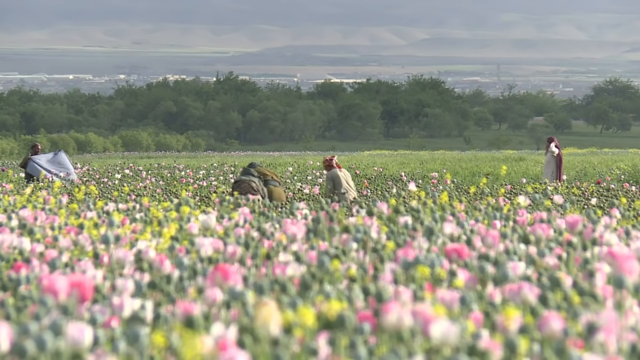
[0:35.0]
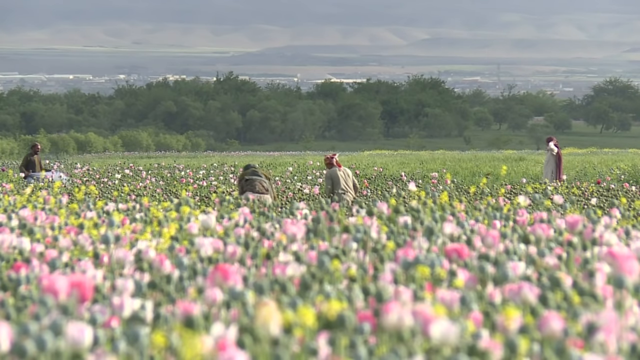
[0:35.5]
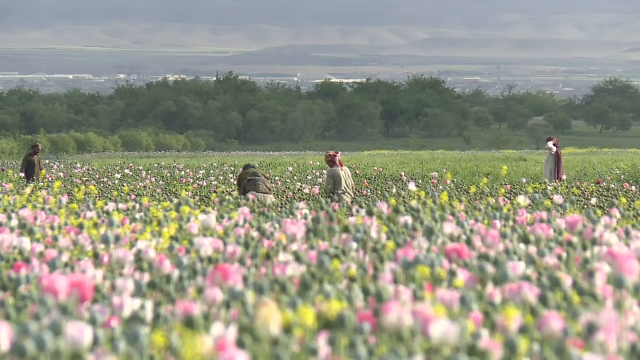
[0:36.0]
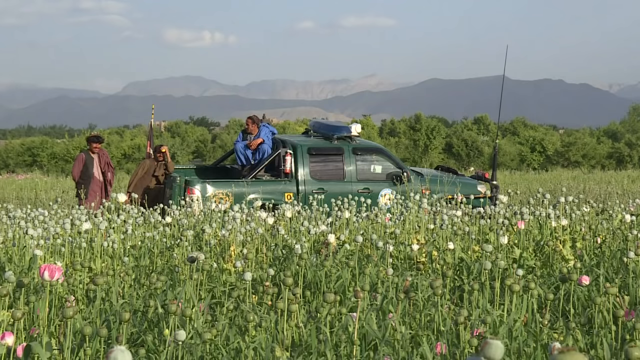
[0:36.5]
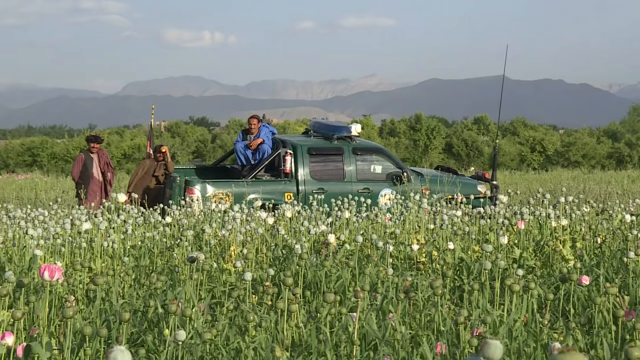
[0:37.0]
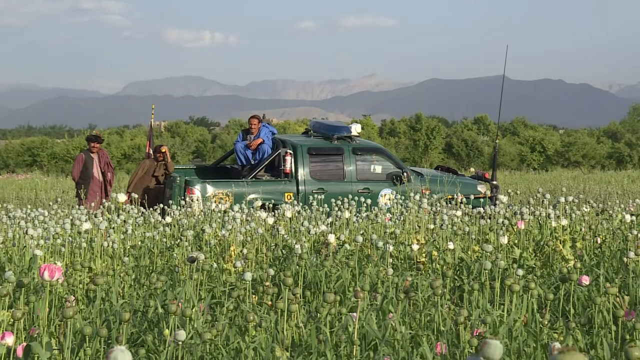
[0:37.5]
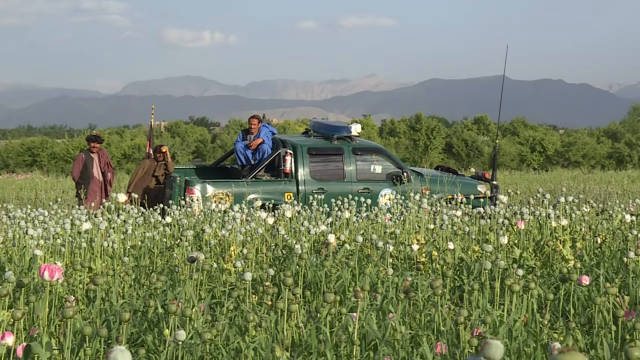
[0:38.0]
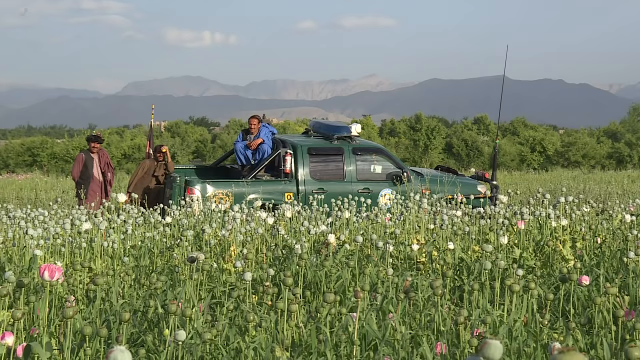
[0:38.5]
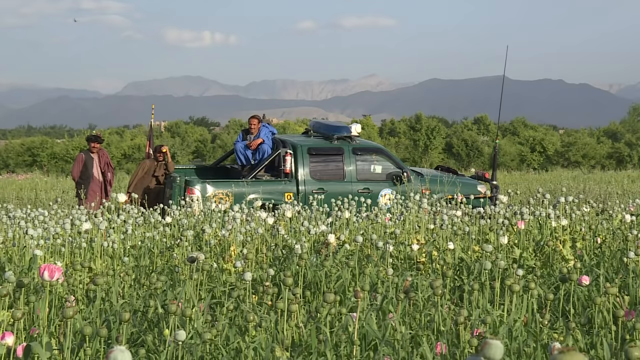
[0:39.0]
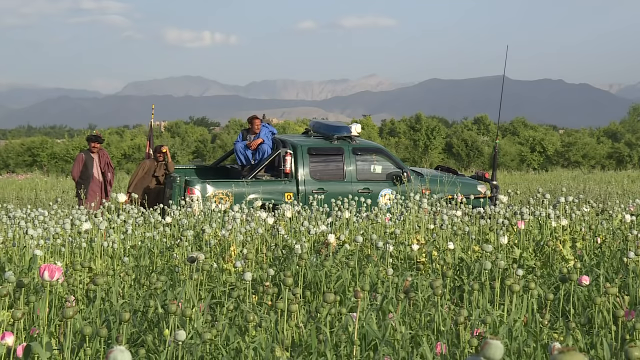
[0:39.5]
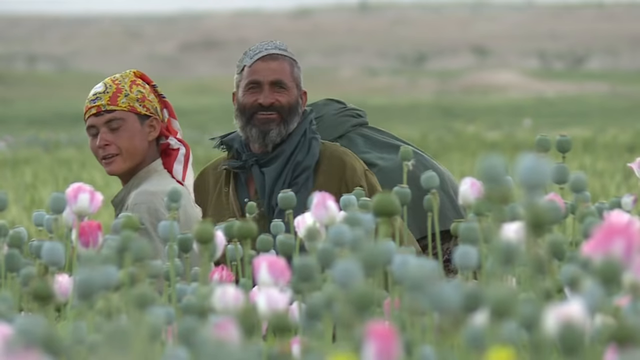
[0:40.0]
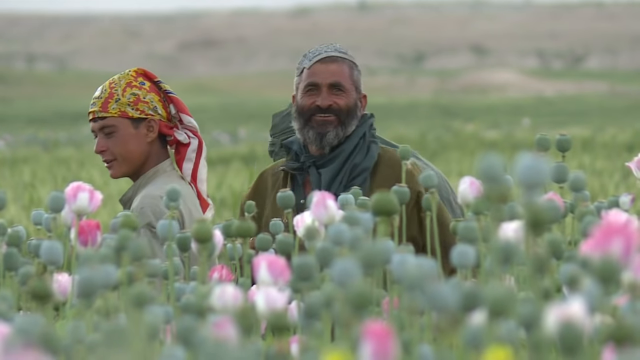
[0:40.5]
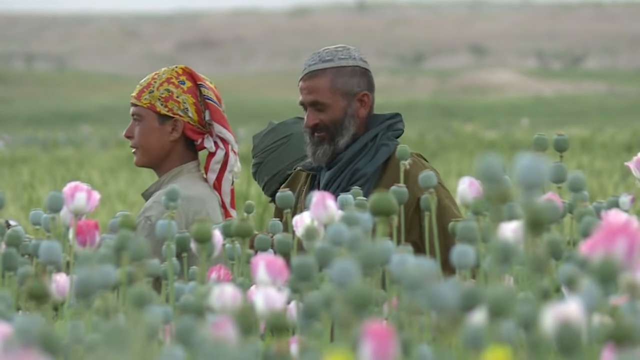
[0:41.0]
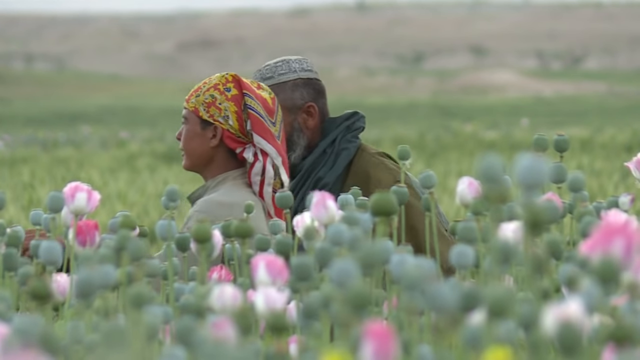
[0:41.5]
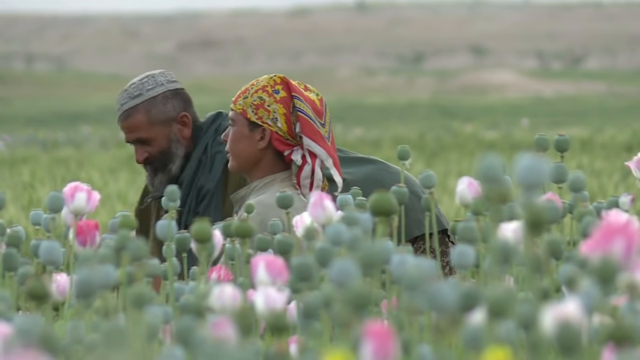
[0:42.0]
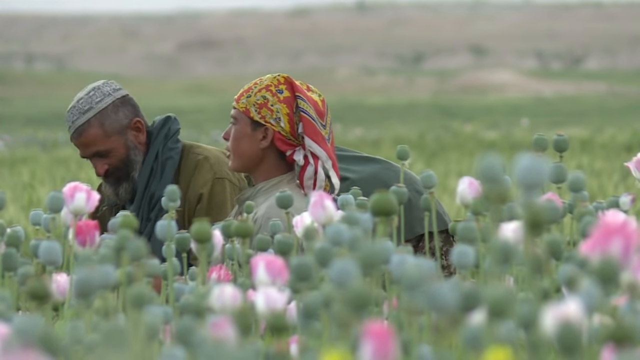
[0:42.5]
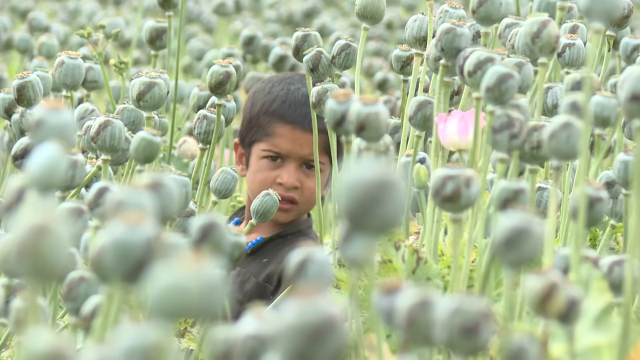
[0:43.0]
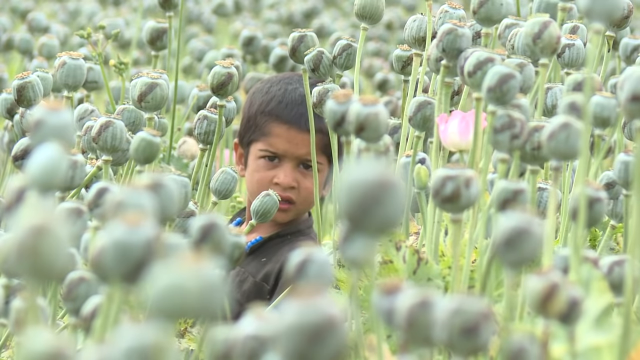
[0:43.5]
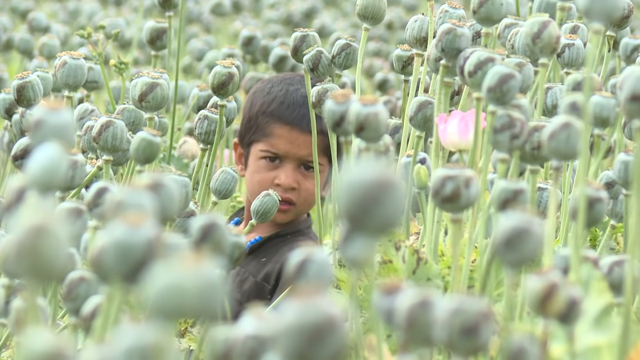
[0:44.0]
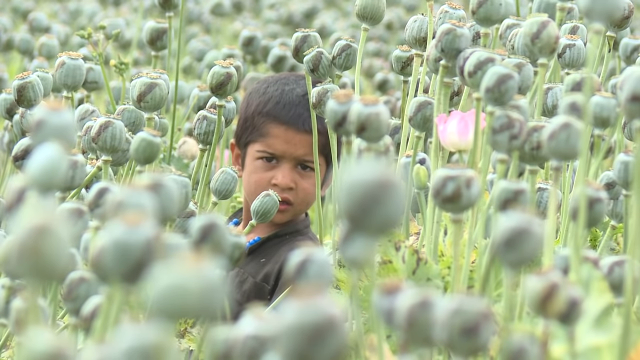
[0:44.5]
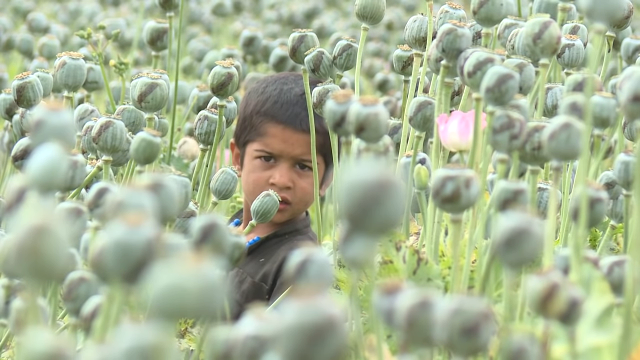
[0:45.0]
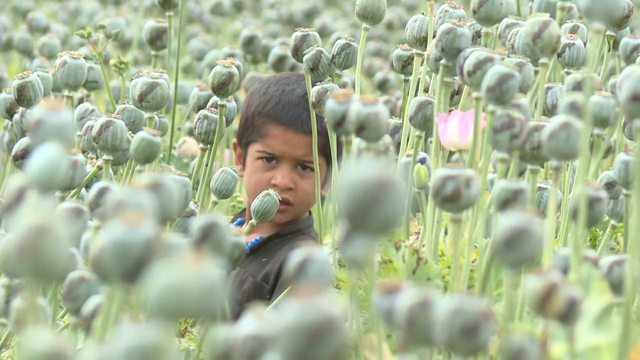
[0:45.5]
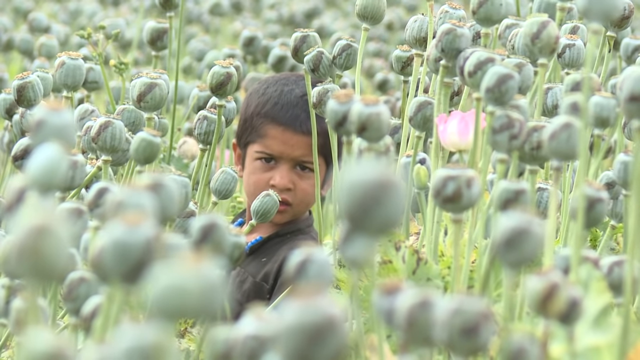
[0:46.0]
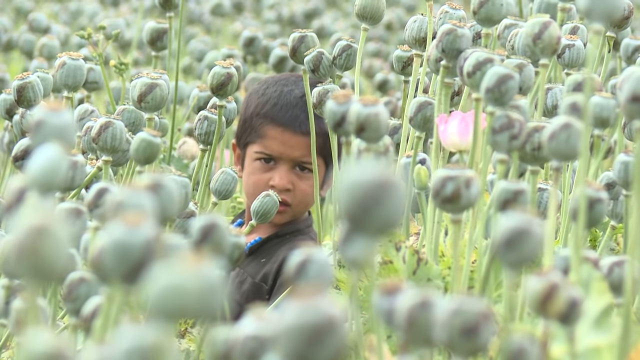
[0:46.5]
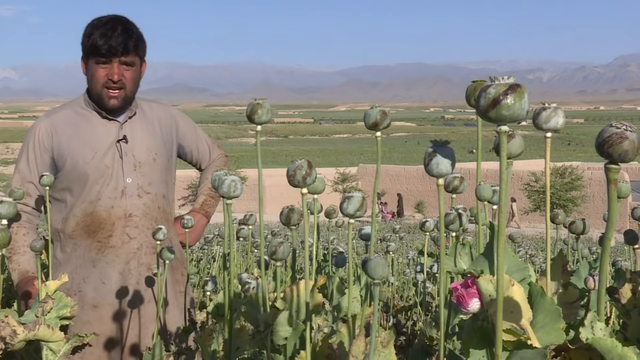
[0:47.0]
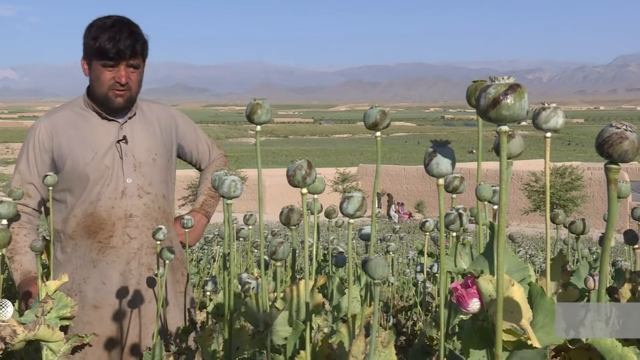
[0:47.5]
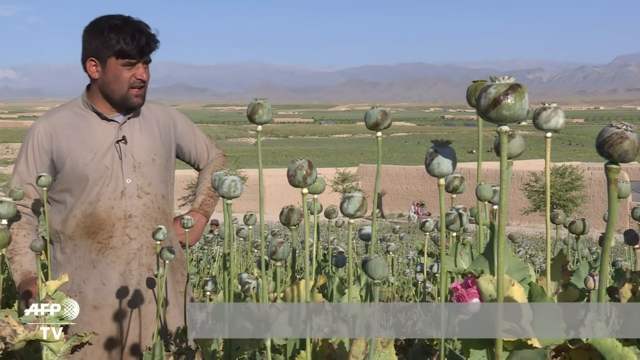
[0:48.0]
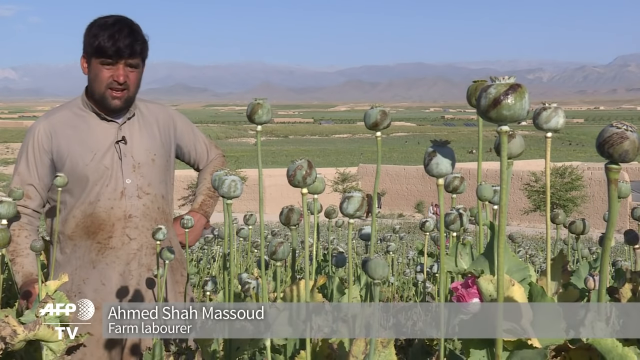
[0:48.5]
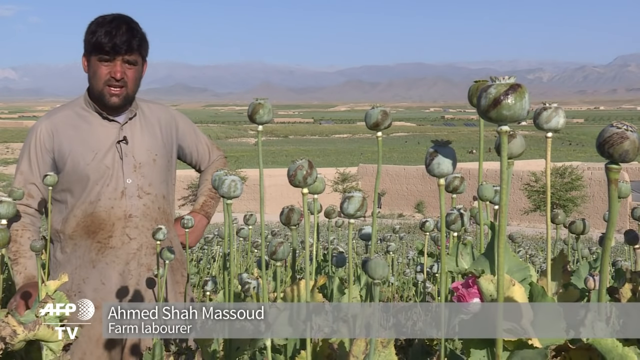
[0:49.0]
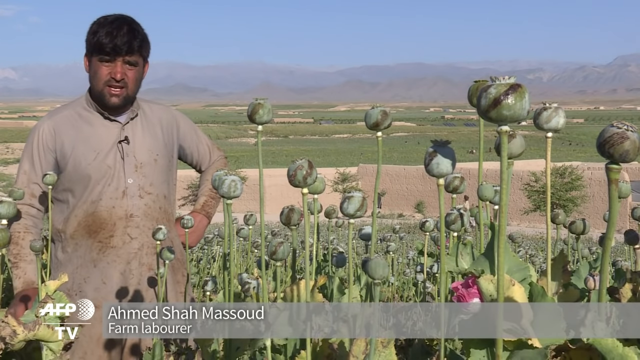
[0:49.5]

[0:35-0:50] A dark green truck stands in the middle of the poppy fields, its front facing right. A man in a purple shirt and green head wrap stands to the left of the end of the truck. To his right another man stands leaning against the tailgate, dressed in dark brown with a dark brown head wrap. A man sits in the back of the truck facing left, dressed all in blue, and there are blue lights on the truck. Green trees and blue sky are in the background. A very close shot shows three people working in the field. Many of the poppies have not opened and are still white, with a few purples scattered about. On the left is a young man facing left in a white shirt, with a head wrap that almost looks like an American flag coming off the back, though its top is yellow and orange. To his right is an older man who appears to be his father, with a gray and black beard, gray hair and a big smile, facing the camera slightly left, wearing a brown shirt and a green head wrap. Behind him a little of someone's head in a green head wrap is visible. The view turns to a small child in a brown shirt in the field, looking curiously toward the camera. It then cuts to a man named Ahmed Shah Massoud, who has a dirty white shirt and short black hair.